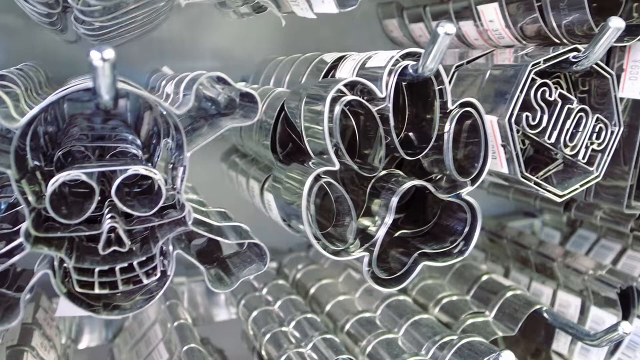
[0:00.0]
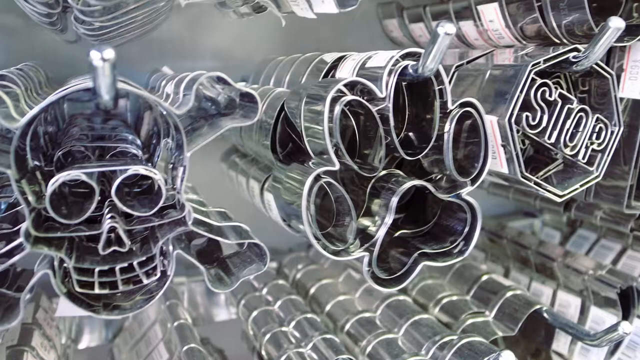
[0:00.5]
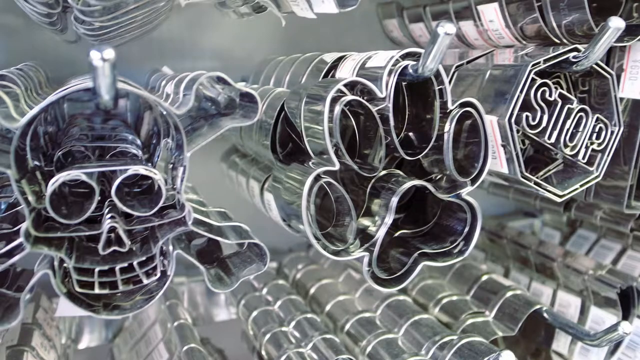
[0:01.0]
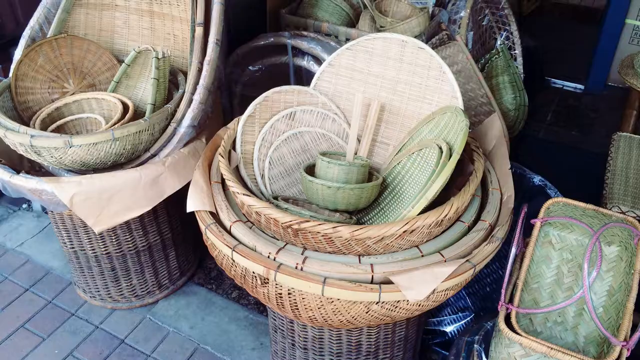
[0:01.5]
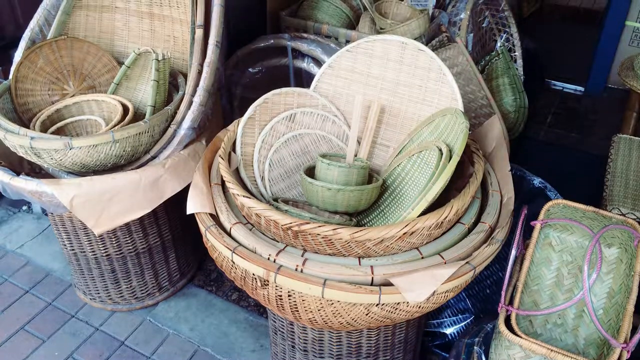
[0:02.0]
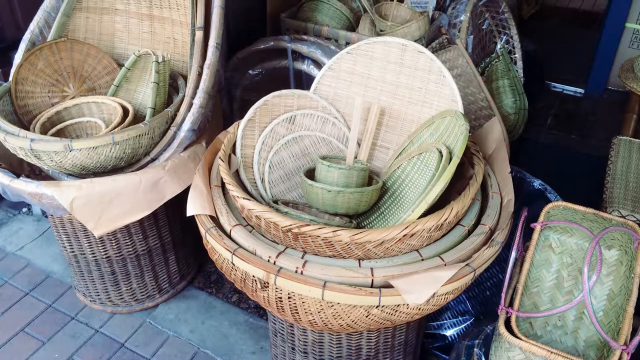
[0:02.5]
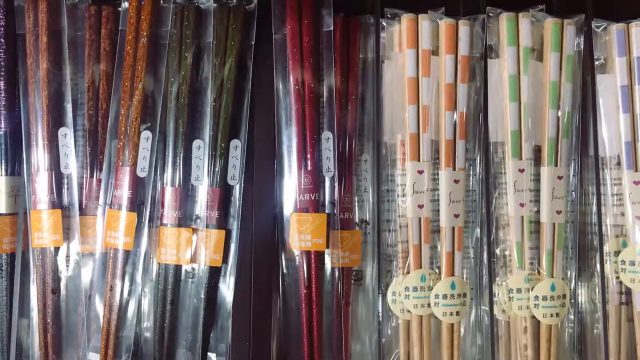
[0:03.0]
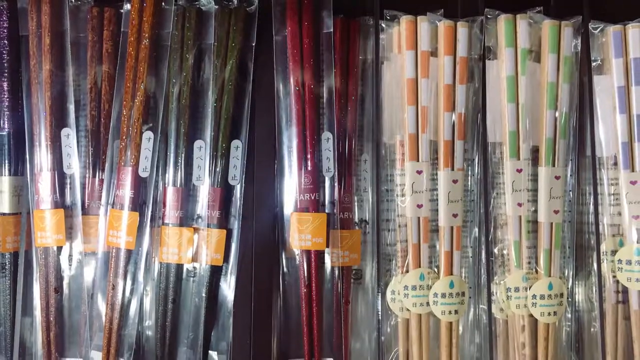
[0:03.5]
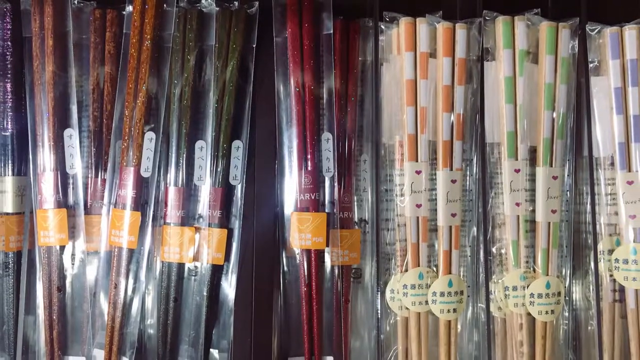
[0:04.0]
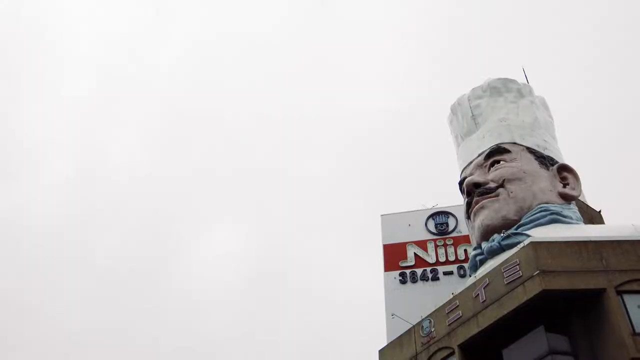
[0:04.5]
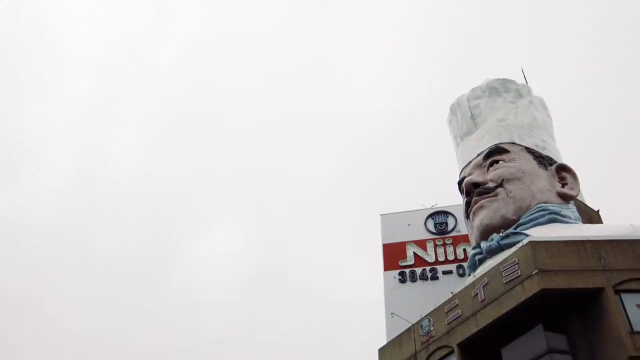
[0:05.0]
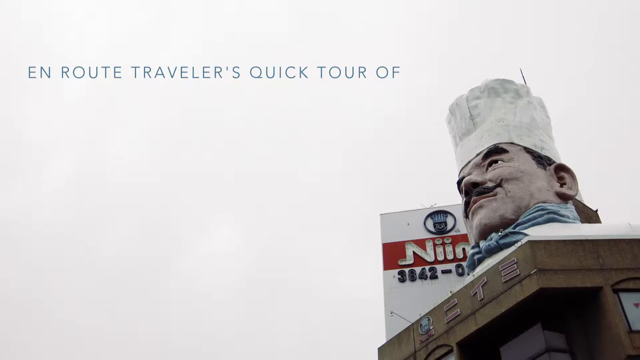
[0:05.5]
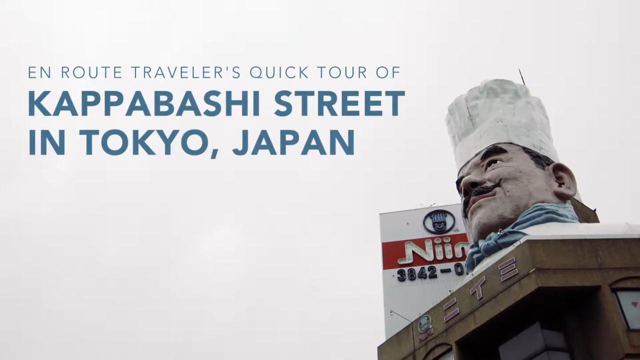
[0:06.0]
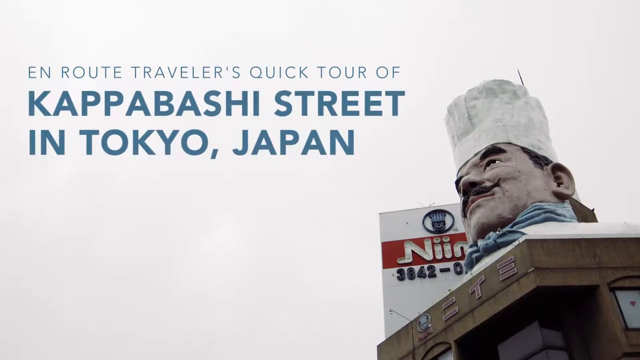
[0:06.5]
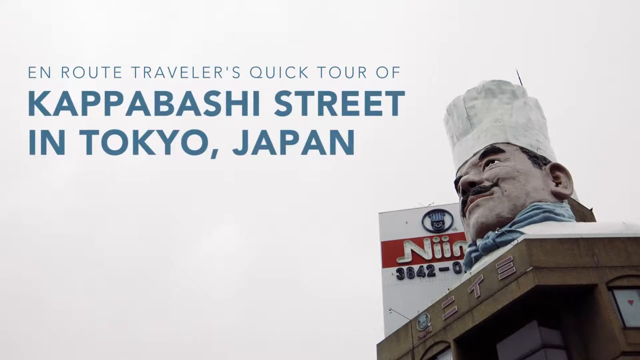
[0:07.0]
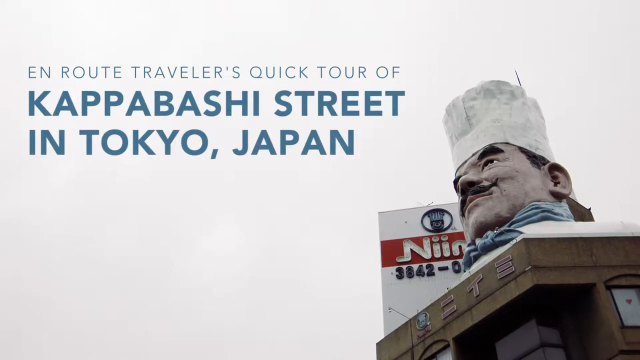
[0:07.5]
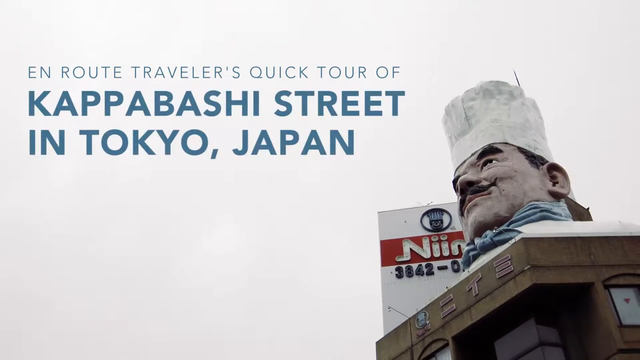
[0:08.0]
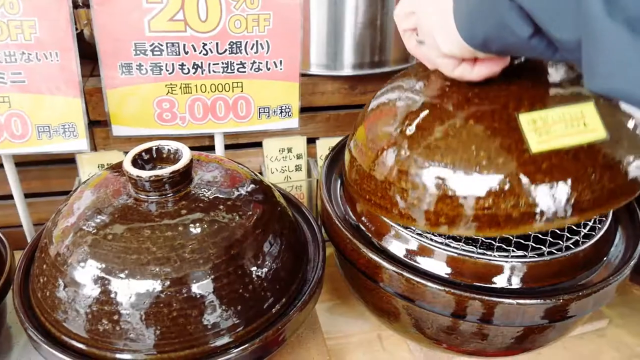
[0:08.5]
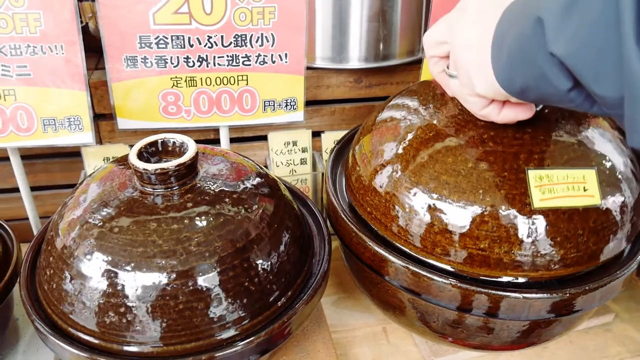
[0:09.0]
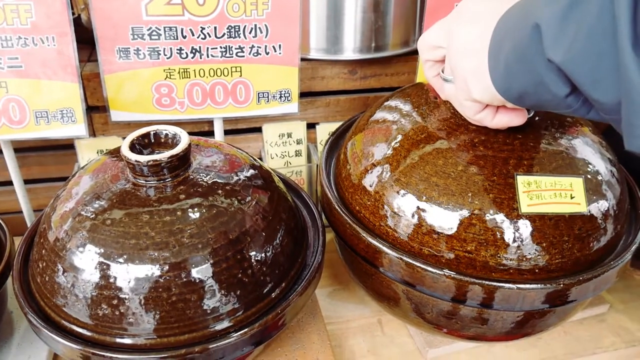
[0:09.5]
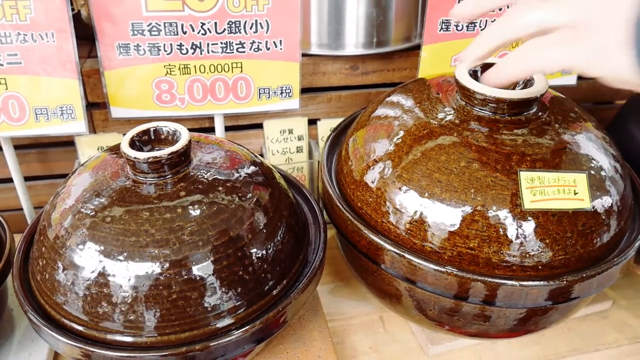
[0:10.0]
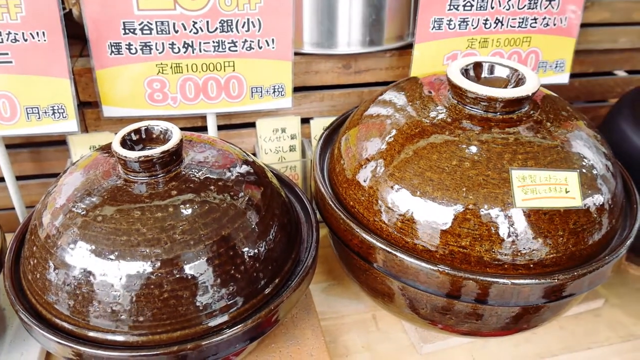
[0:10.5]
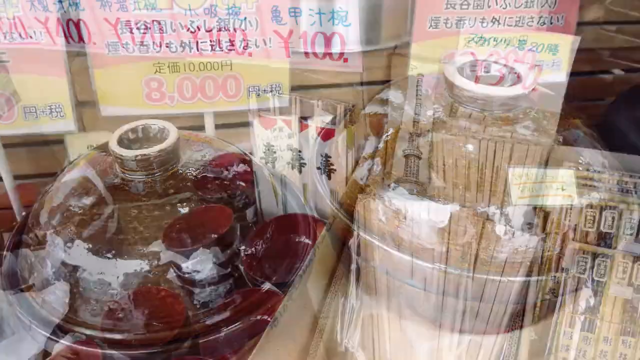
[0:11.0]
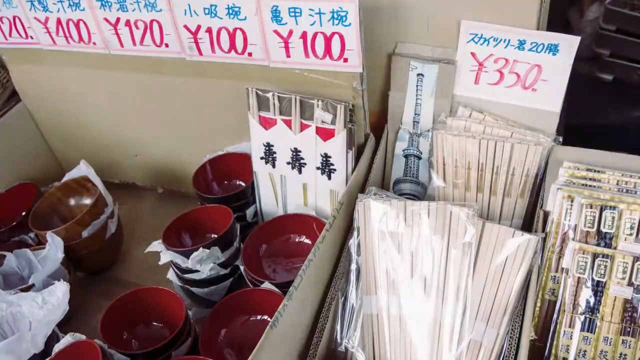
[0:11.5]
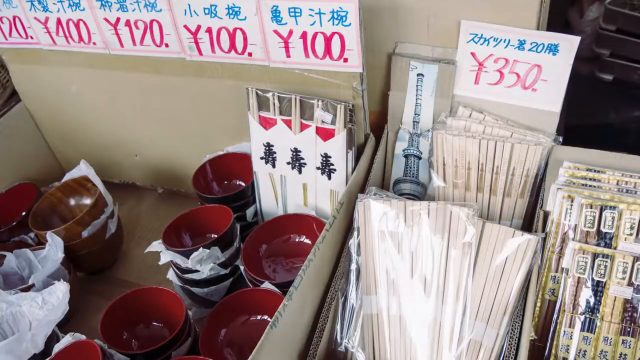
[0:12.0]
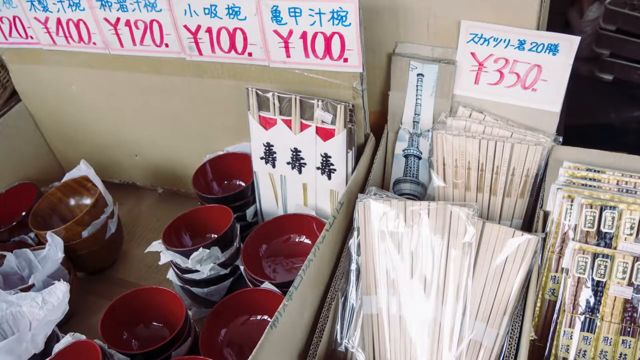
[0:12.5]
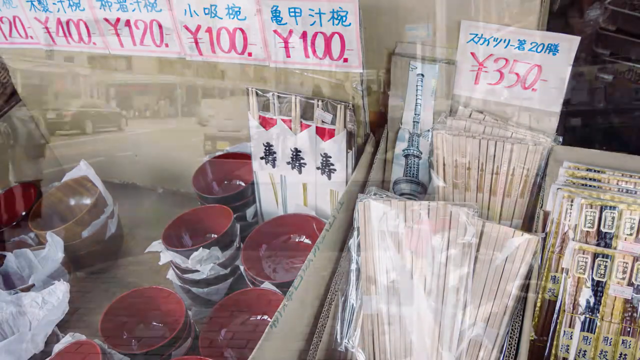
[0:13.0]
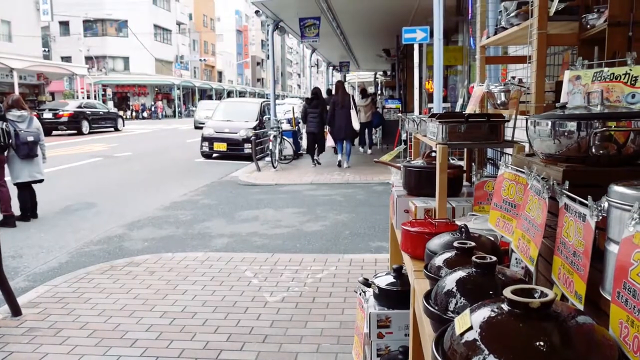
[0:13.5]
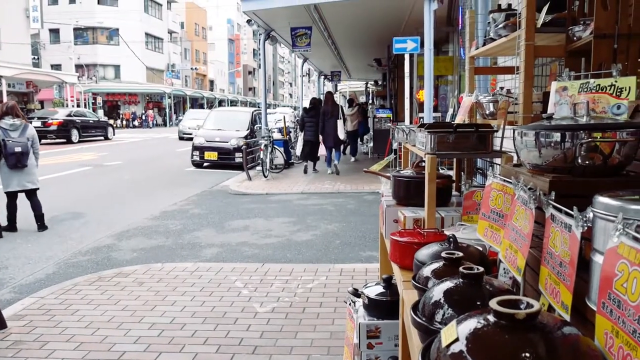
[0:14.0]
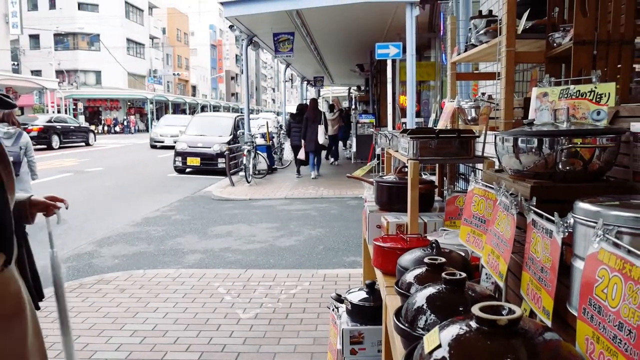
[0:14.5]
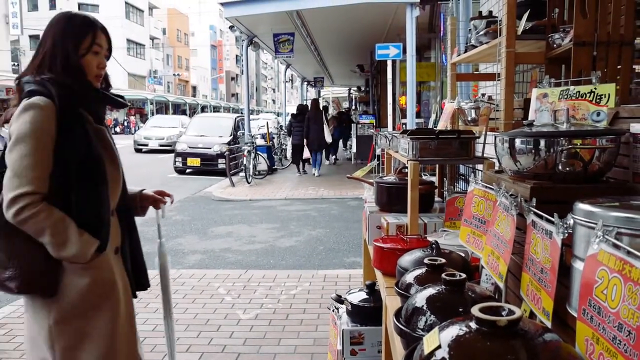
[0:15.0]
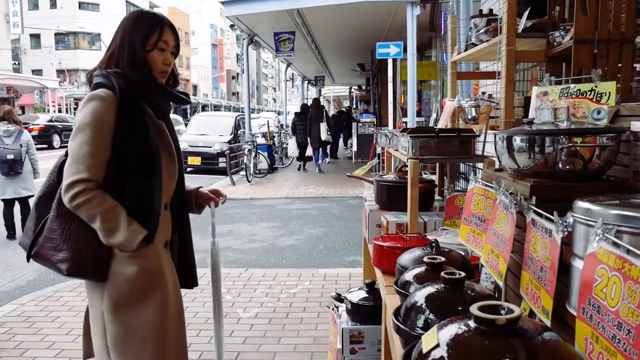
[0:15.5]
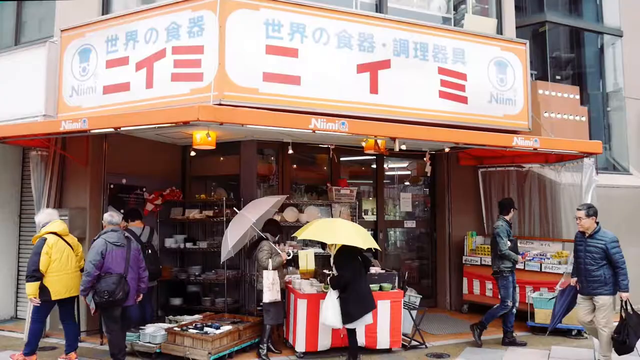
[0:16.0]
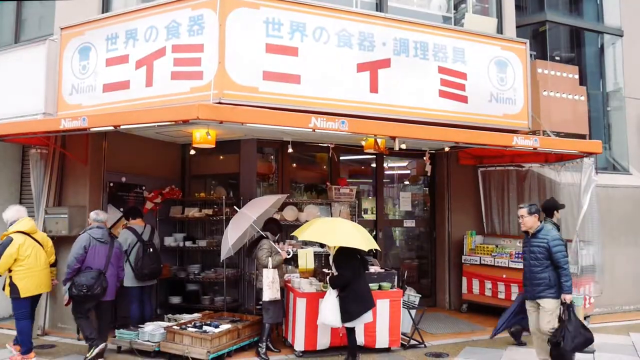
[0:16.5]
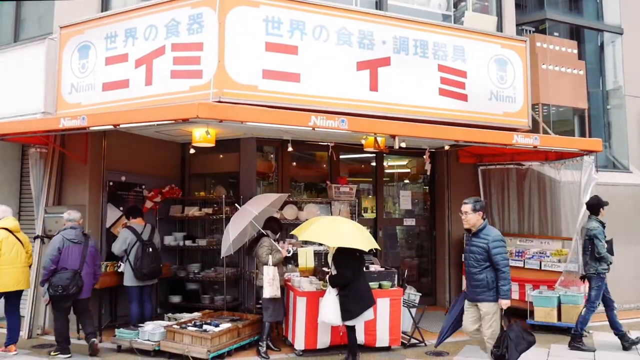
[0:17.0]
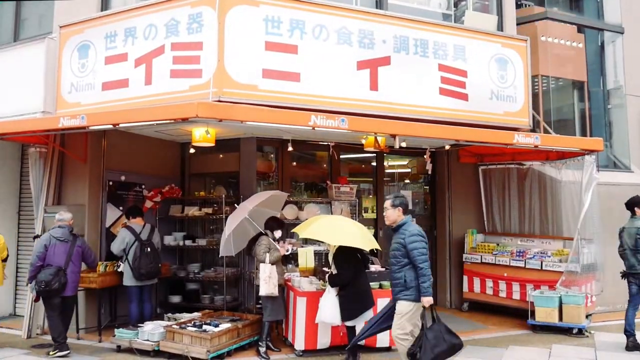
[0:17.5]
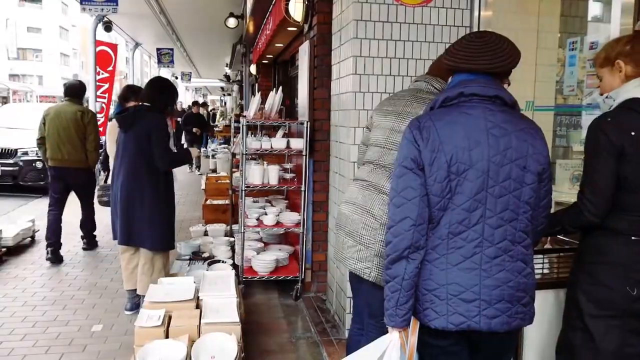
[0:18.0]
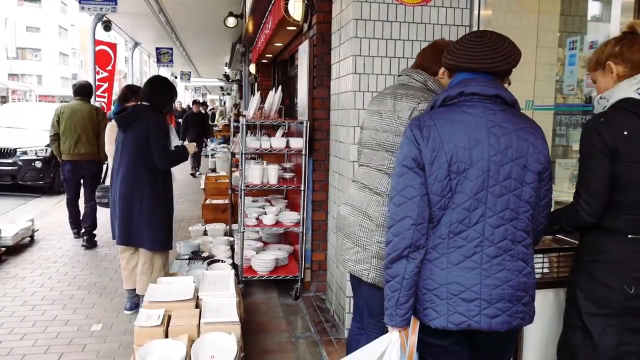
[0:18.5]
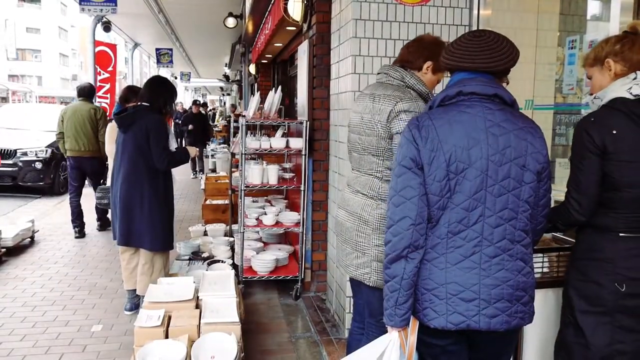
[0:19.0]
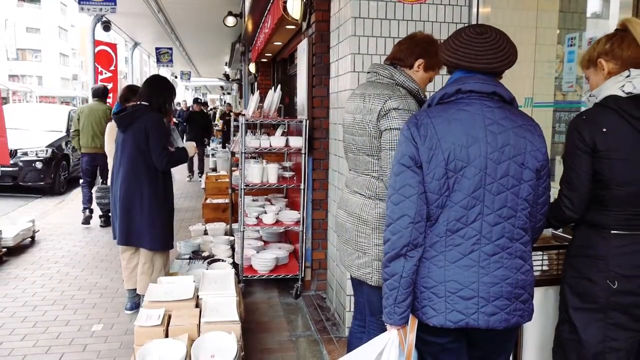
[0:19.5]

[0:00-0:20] Kitchen accessories are on display: pots, dishes, knives and other accessories. The video starts with a human skeleton like the ones pirates use. Next comes a sign reading "stop", and then a dog's or puppy's foot made of glass. Baskets apparently made from bamboo strips appear; they are handmade from timber. Other accessories that look like spatulas follow, then the head of a chef, and then the text "Enroute travellers quick tour of Kapabashi Street in Tokyo, Japan". The numbers 3842 are written, and the rest of the numbers are visible too. A person opens and closes a pot. A price of 8,000 in Japanese currency appears with a 20% offer. Other pots, red and brownish, are shown, with "Bibitukari soup" and prices of 400, 120, 100 and 350. A busy street follows, where some cars are parked, others are moving, and people are moving. Then come the pots, the accessories and the house. A woman approaches the accessories. Other people carry umbrellas, including a grey one and a yellow one, and others have backpacks near the store with the accessories. People ask about, touch and carry the accessories. Then the knives are shown.